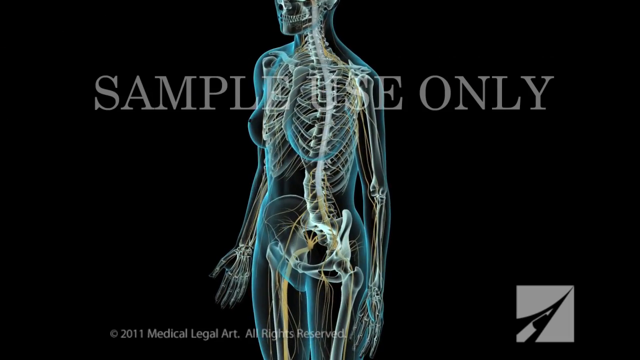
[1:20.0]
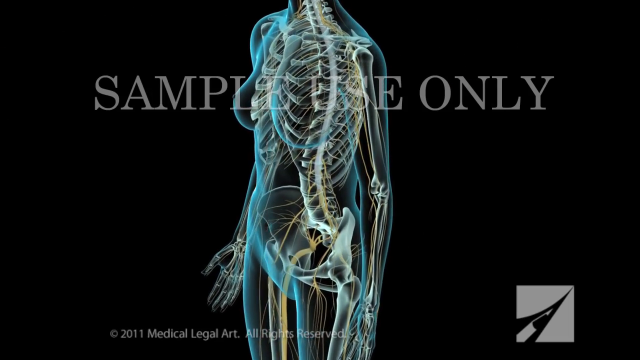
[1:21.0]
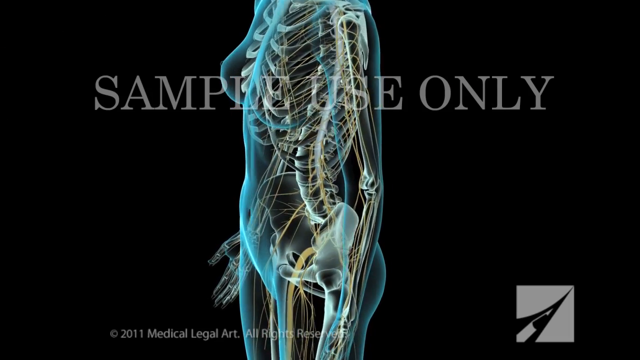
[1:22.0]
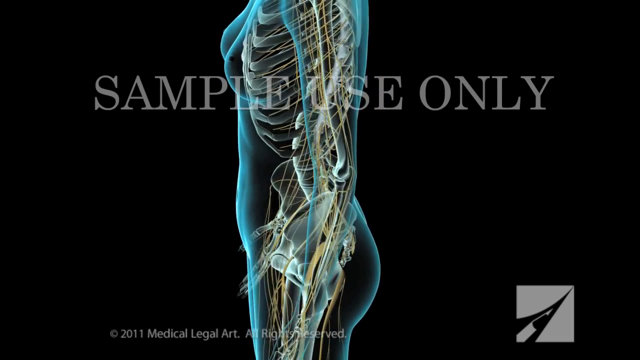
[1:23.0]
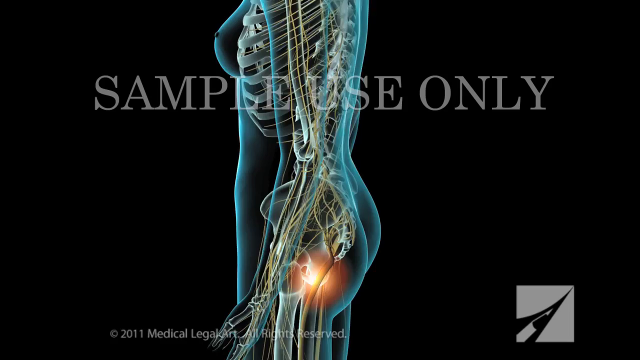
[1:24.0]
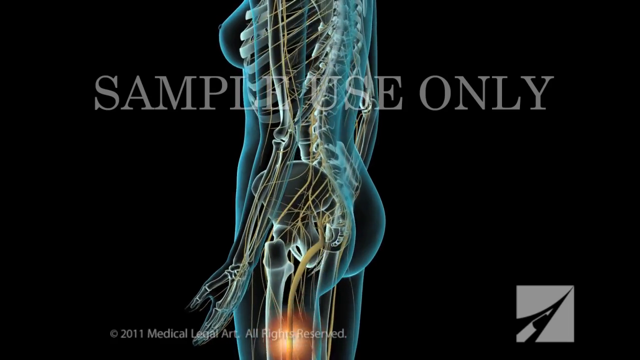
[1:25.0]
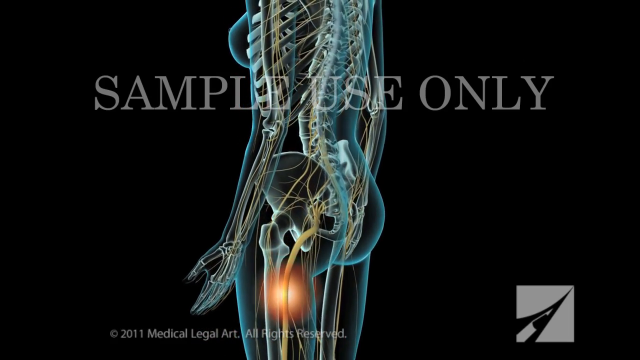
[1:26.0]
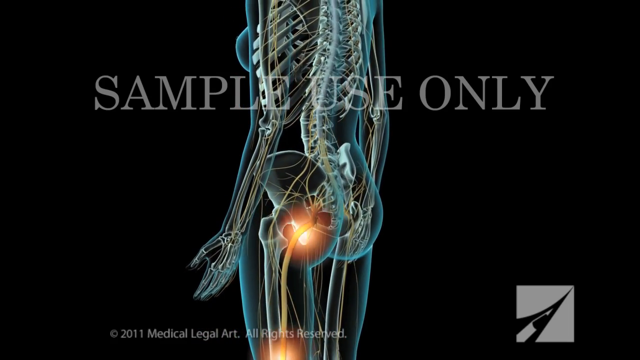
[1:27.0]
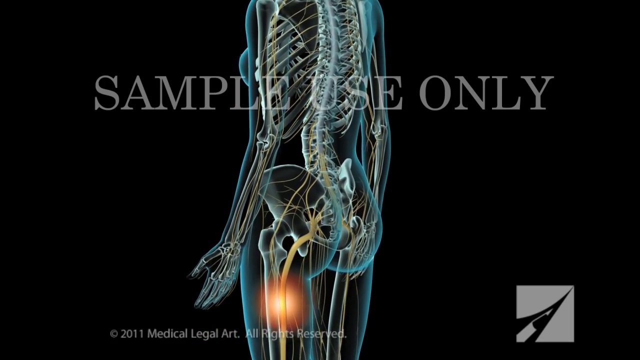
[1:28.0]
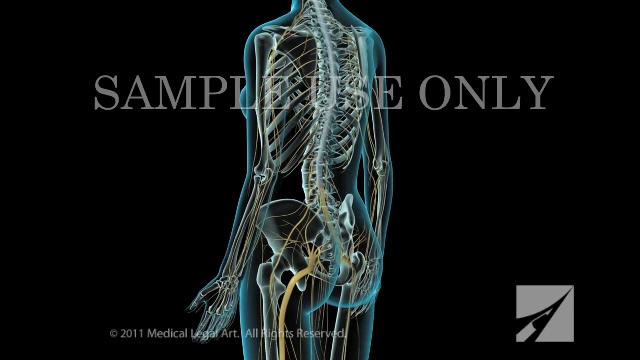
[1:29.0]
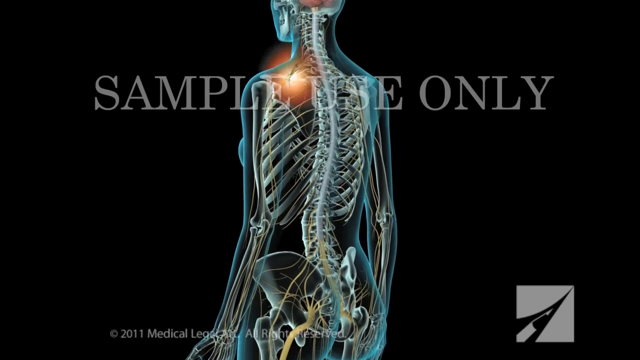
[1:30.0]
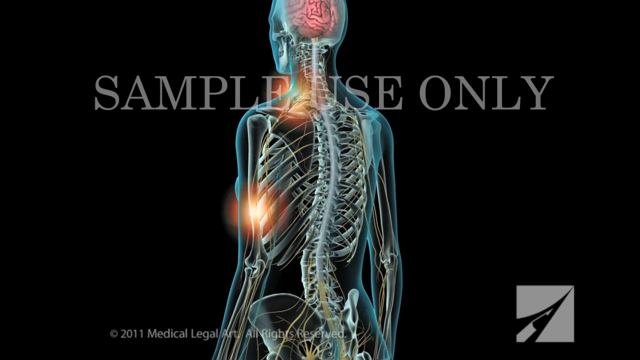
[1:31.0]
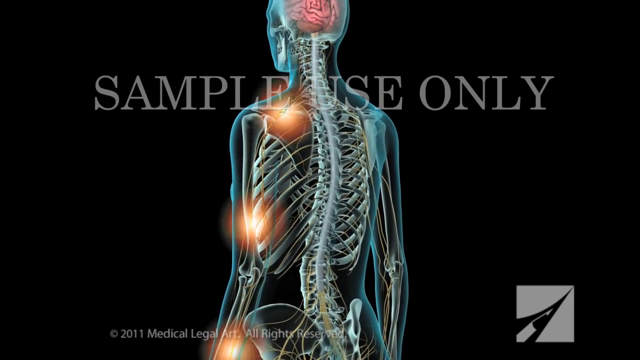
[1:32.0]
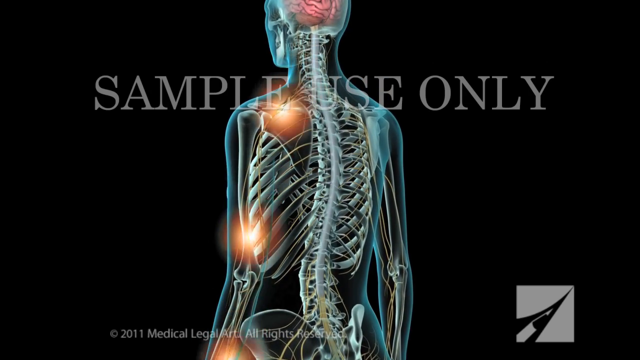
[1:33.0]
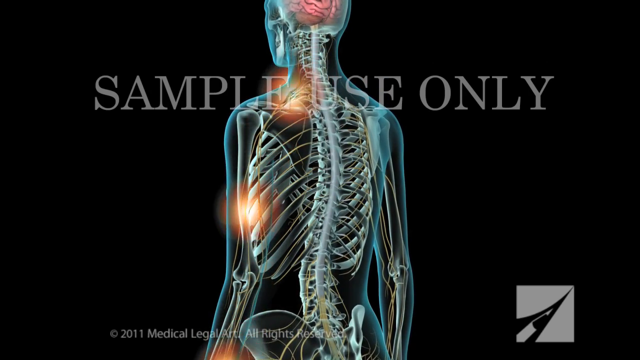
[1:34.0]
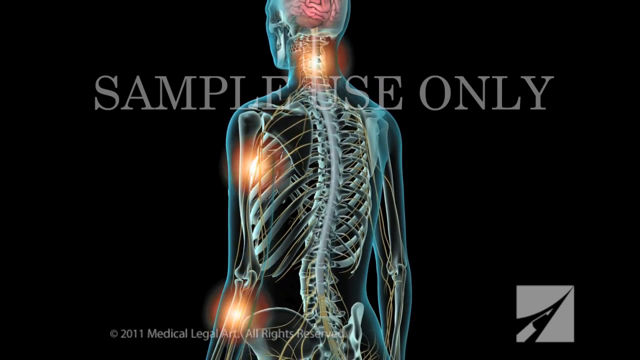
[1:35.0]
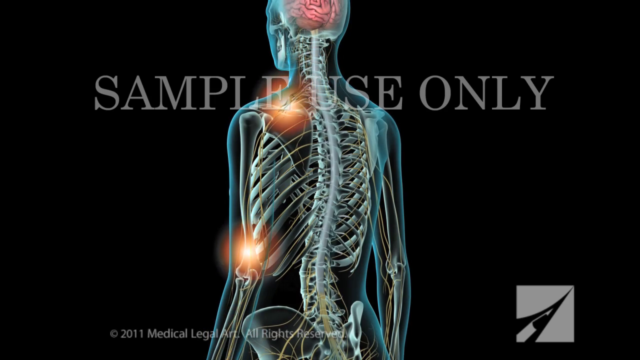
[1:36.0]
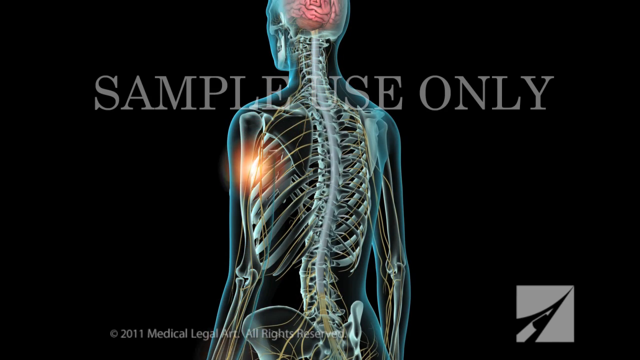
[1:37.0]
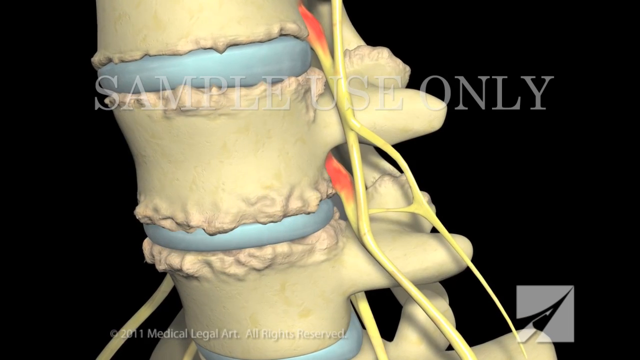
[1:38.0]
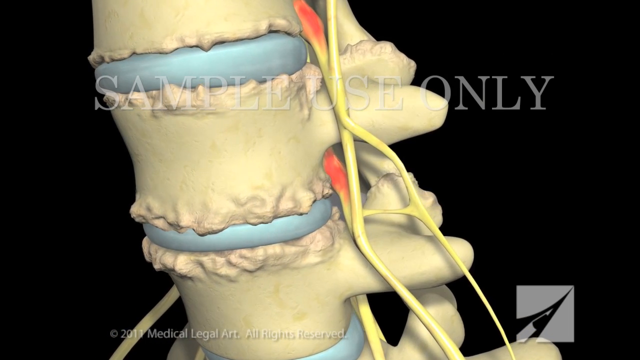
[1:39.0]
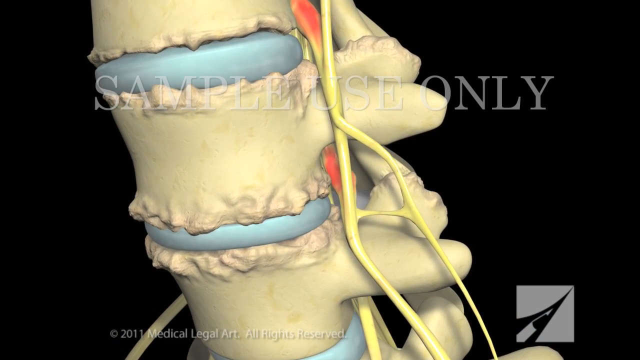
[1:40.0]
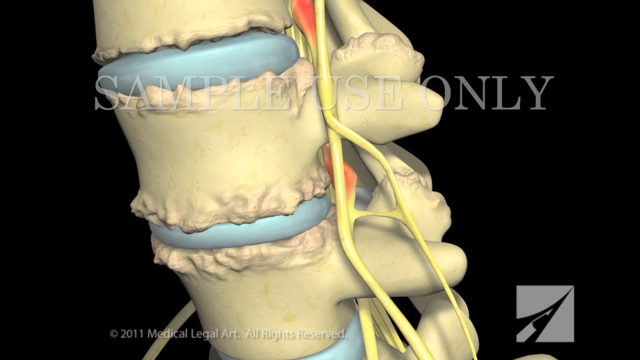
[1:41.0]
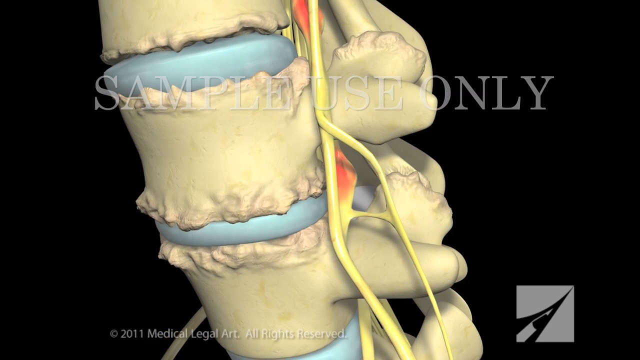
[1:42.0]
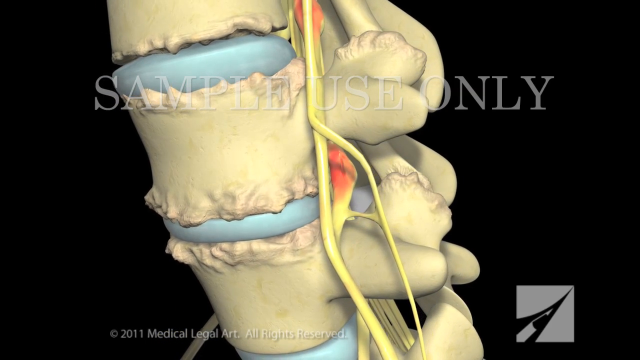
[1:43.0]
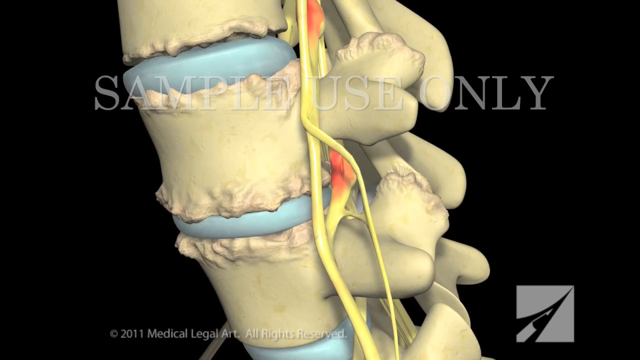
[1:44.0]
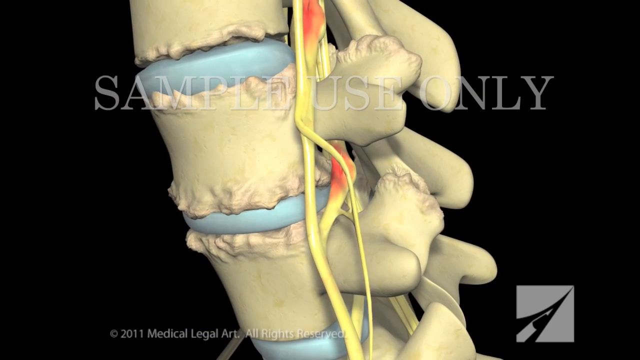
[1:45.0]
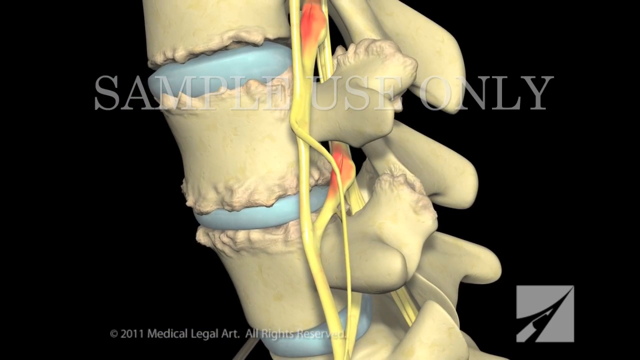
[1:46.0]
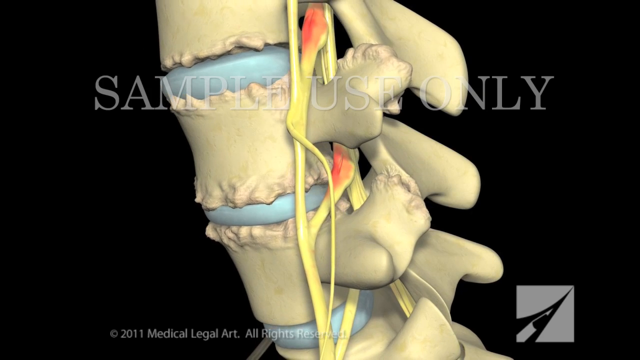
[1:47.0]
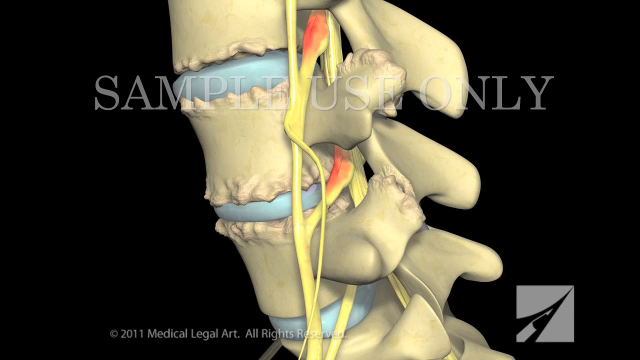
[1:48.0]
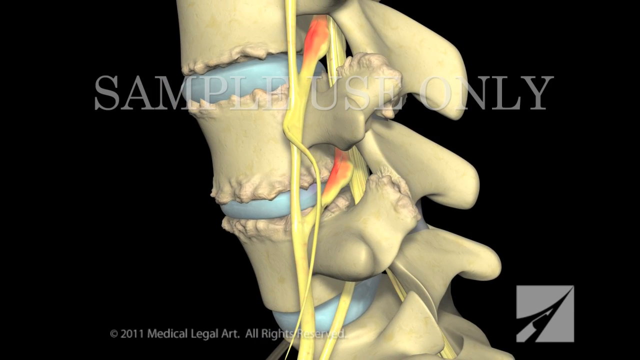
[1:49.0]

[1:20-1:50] A faint light blue translucent outline of a female body faces to the left of the screen but somewhat forward. The nerves and skeleton inside are visible and also somewhat translucent; the nerves are an off-yellow, kind of cream color, and the skeleton is white. Both breasts are visible. She stands upright with both arms down at her sides and palms facing forward, and there are no discernible facial features other than a skull. The background is black, with a gray watermark reading "sample use only" across the upper third. The view pans in toward the body as it turns more to the left, zeroing in on the back and buttocks, where a glowing orange spot starts at the base of the spine and goes down the leg to symbolize sciatica pain. The view then pans up to the base of the skull and the neck, where the same glowing orange lights run from the base of the skull down the cervical spine on the neck, across the left shoulder and down the arm, showing neck pain and a pinched nerve going down into the arm. The view then pans to the left side of the spinal column, showing a section of three vertebrae with insulating tissue between them. At the back of the vertebrae, off-white nerve clusters run vertically up and down the spine, with pink and red spots directly behind the nerves showing pain spots between the vertebrae. The spine faces to the left and turns around in a circle. The view then pans to a blue outline of a body face down on a table.